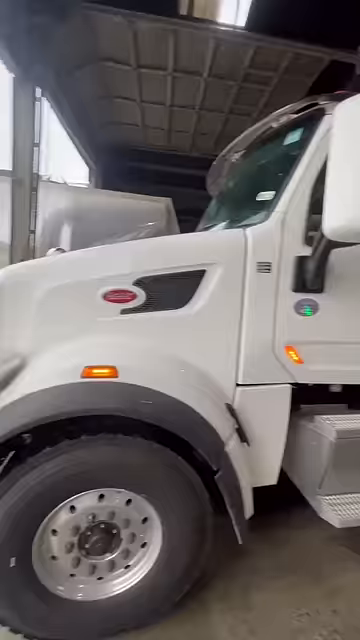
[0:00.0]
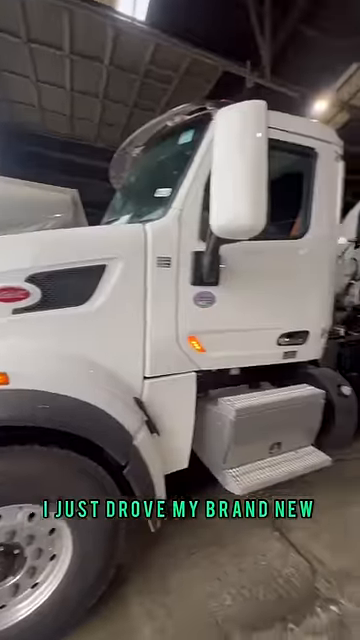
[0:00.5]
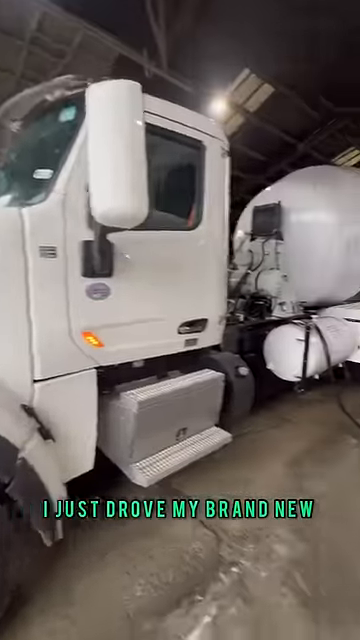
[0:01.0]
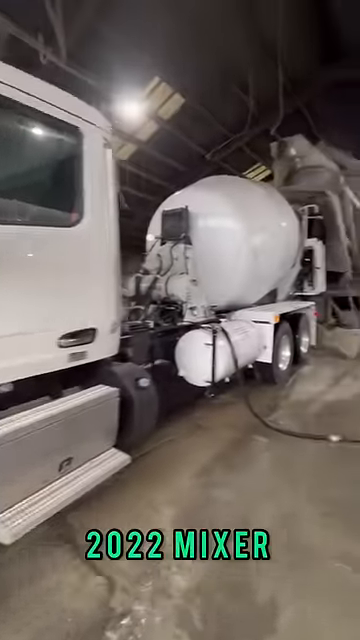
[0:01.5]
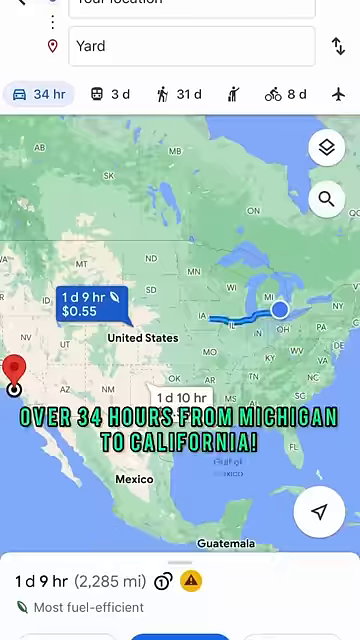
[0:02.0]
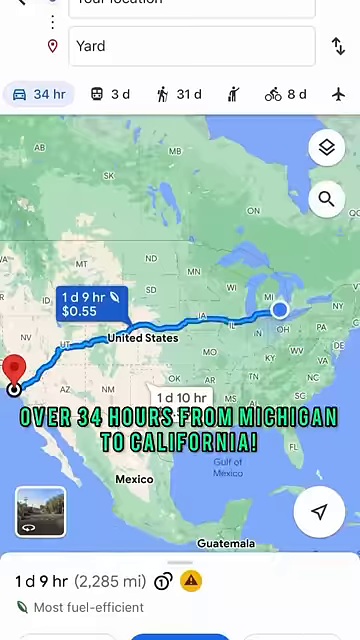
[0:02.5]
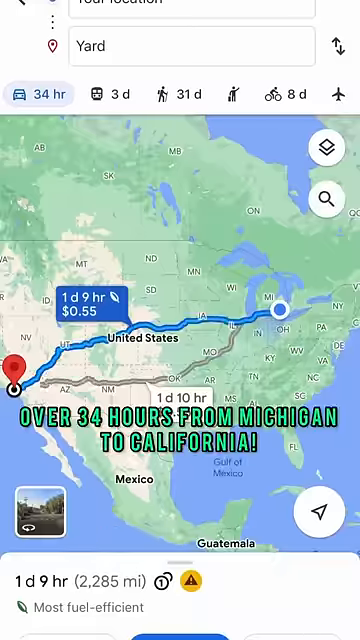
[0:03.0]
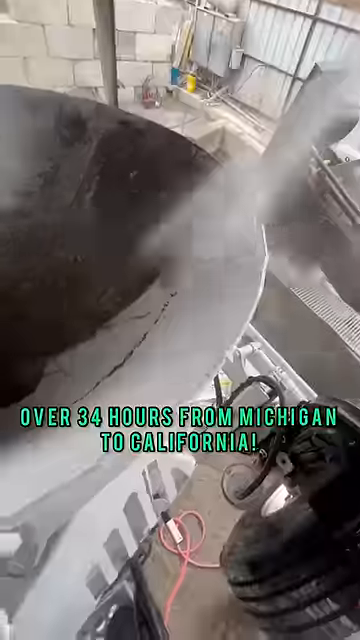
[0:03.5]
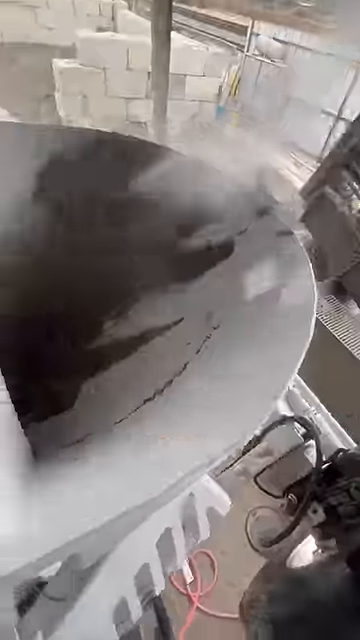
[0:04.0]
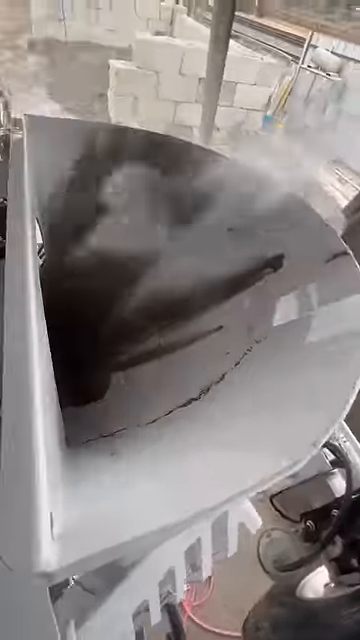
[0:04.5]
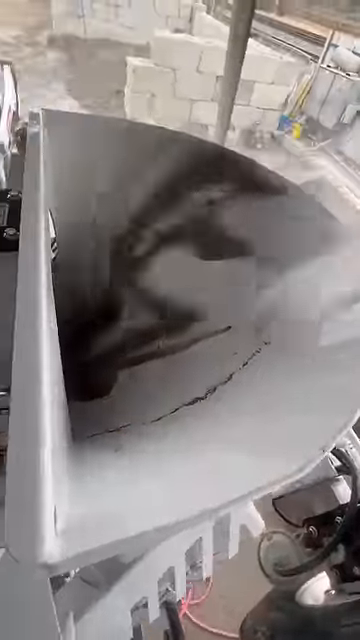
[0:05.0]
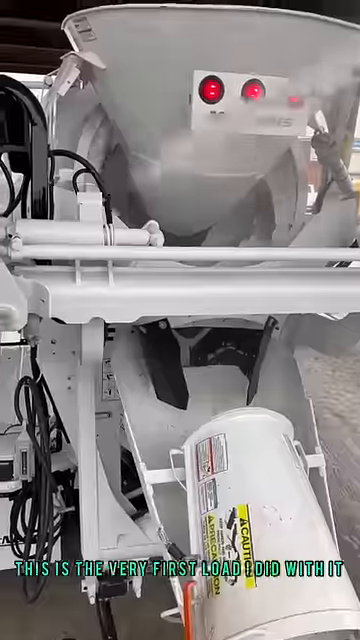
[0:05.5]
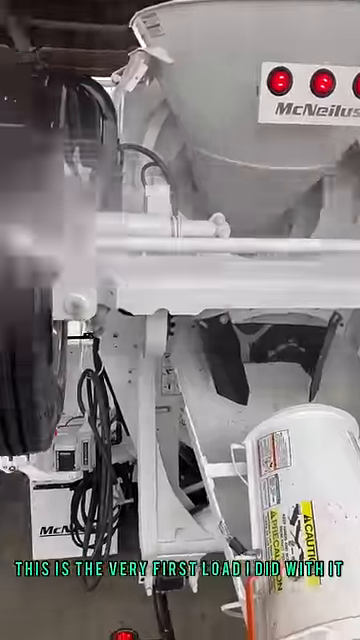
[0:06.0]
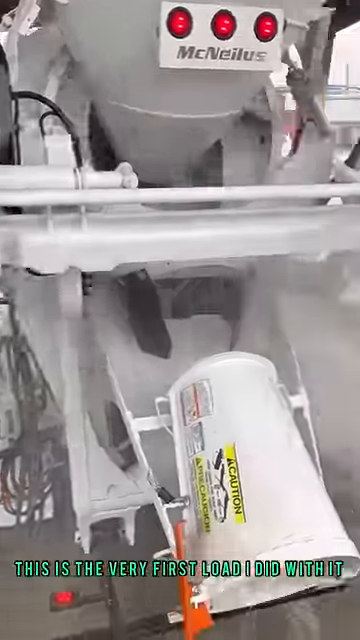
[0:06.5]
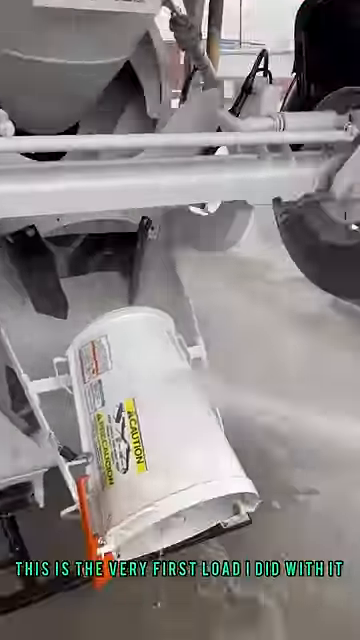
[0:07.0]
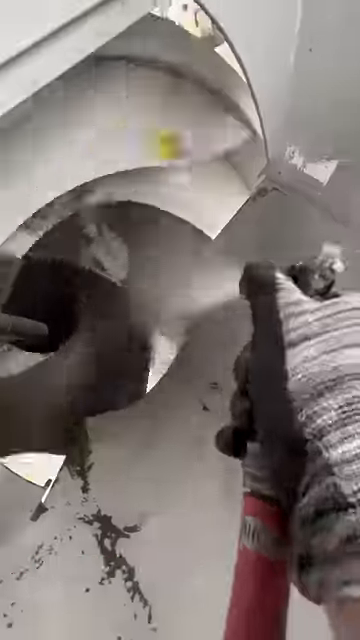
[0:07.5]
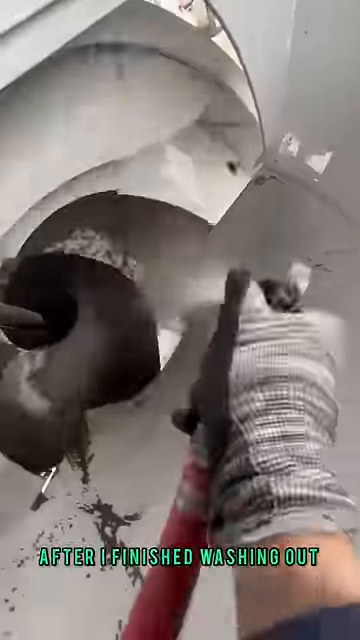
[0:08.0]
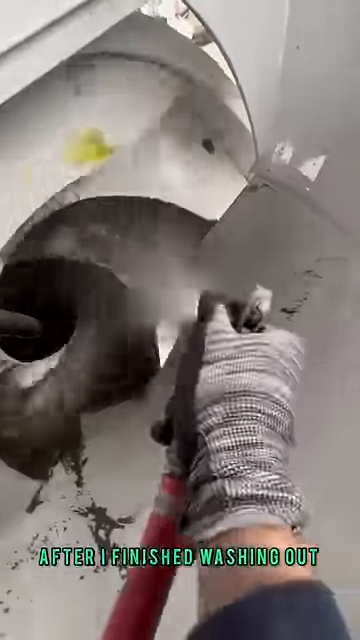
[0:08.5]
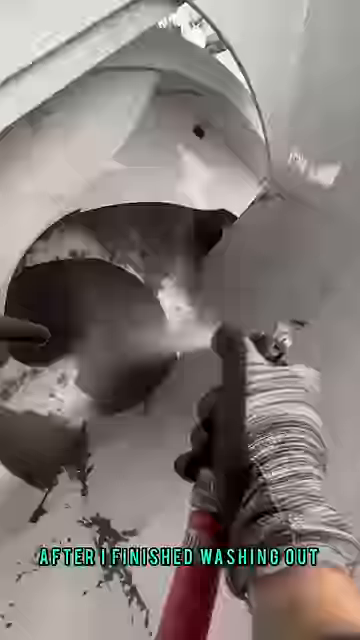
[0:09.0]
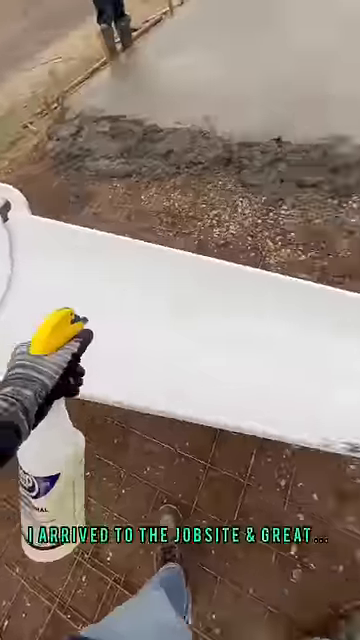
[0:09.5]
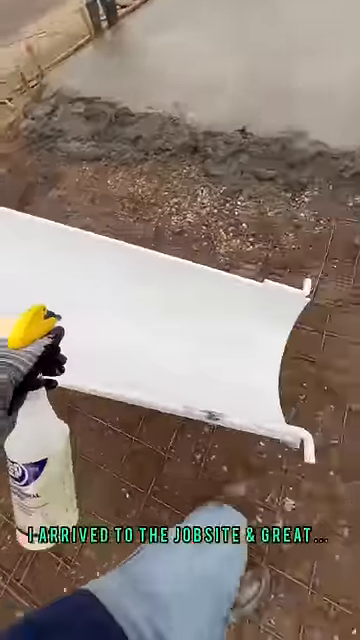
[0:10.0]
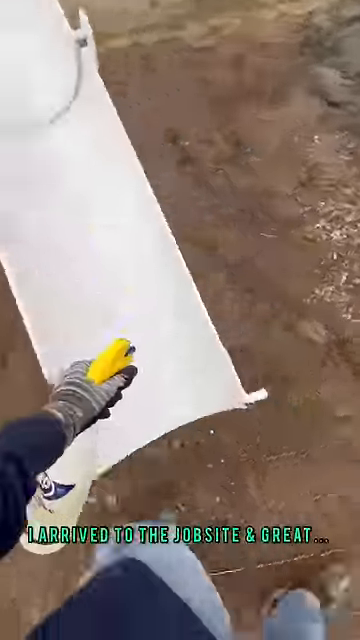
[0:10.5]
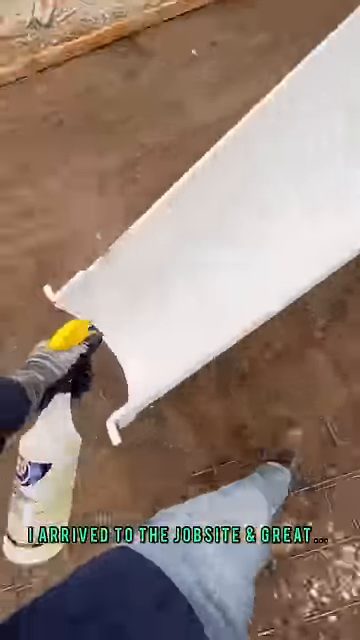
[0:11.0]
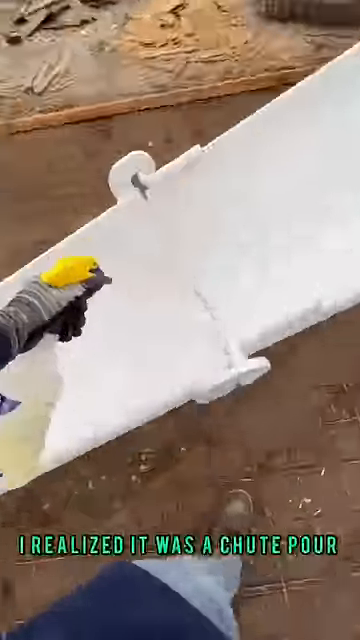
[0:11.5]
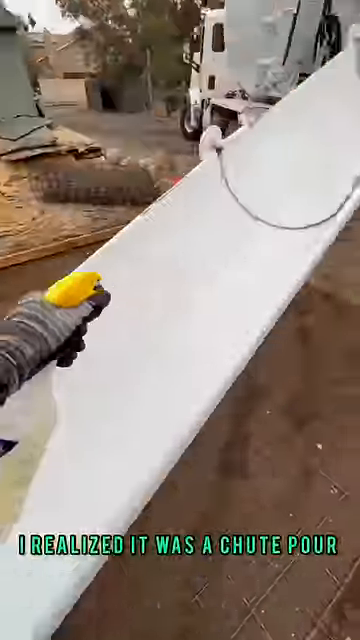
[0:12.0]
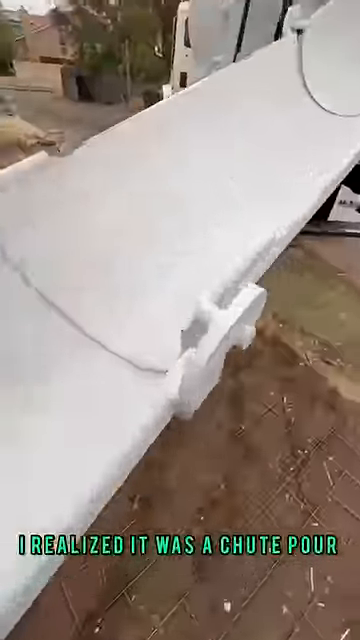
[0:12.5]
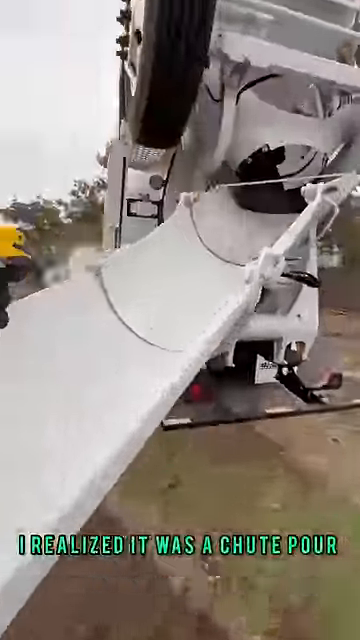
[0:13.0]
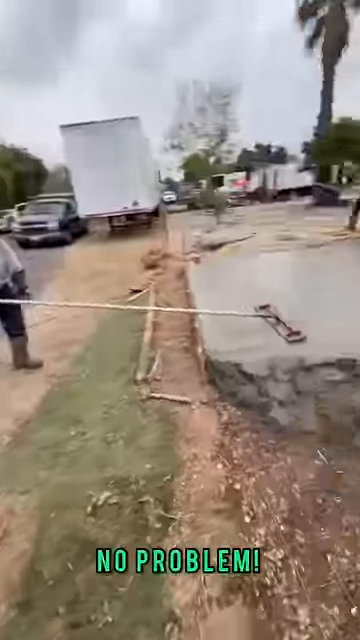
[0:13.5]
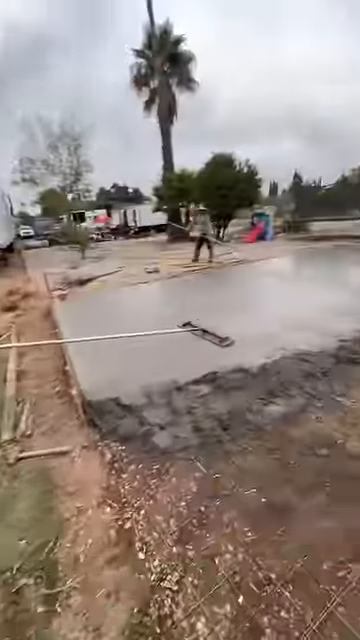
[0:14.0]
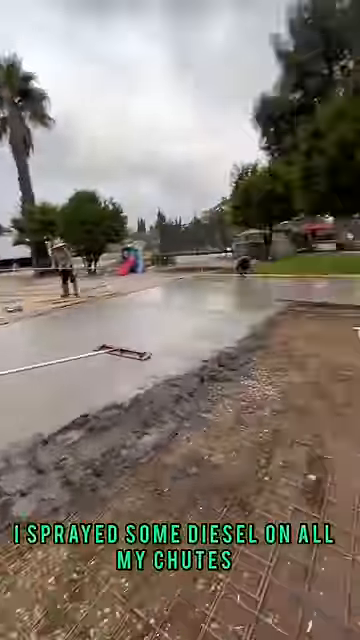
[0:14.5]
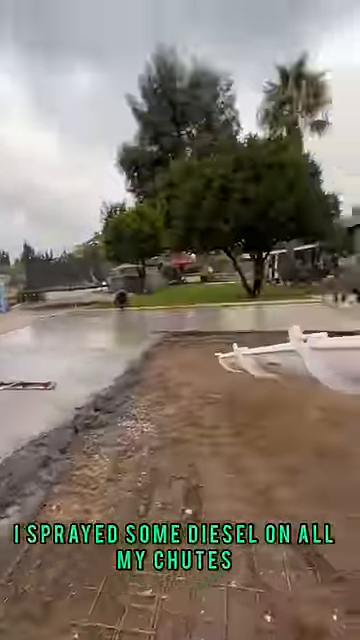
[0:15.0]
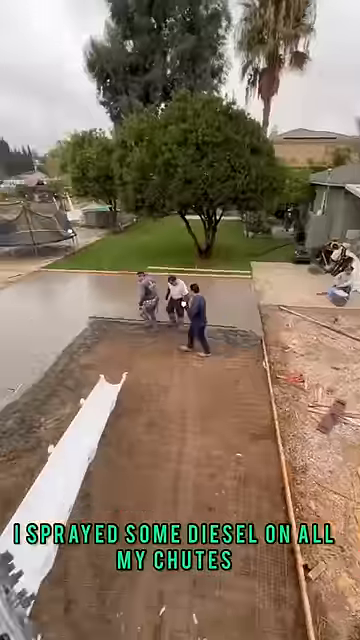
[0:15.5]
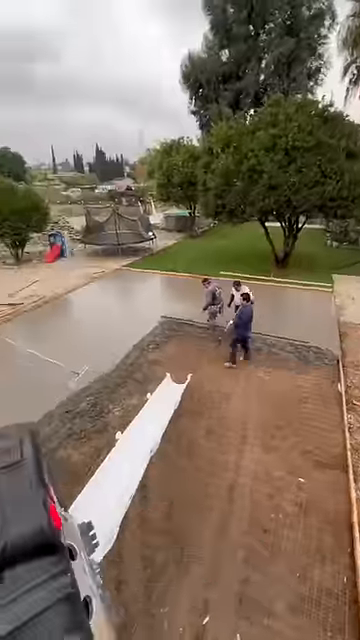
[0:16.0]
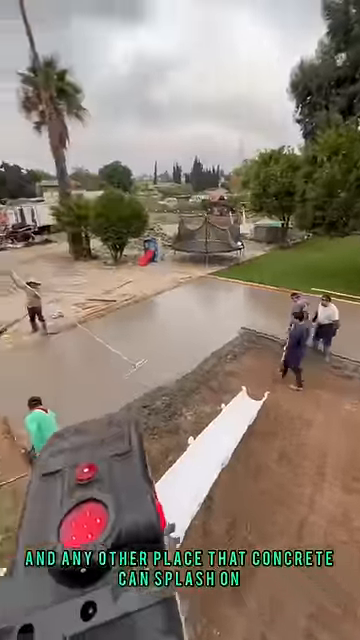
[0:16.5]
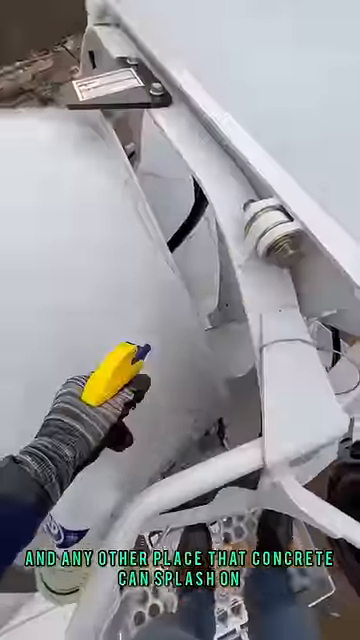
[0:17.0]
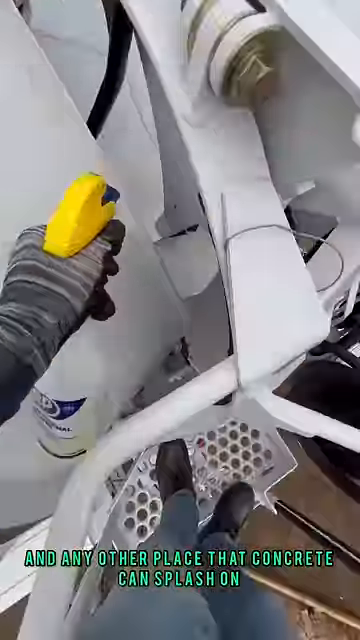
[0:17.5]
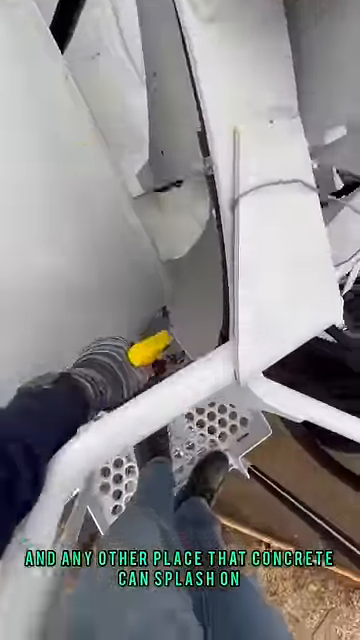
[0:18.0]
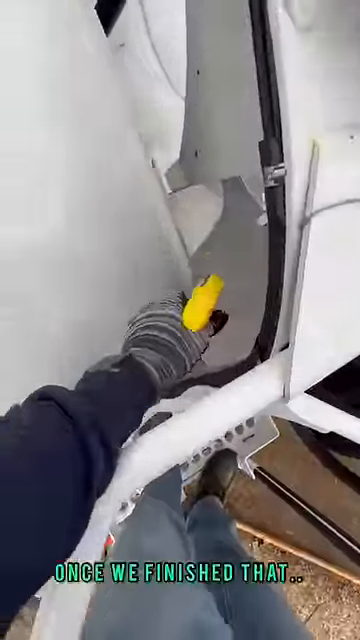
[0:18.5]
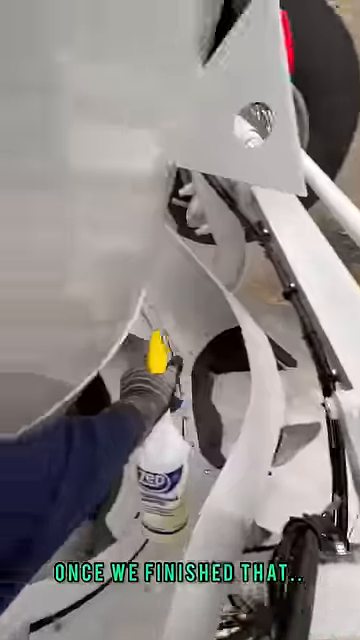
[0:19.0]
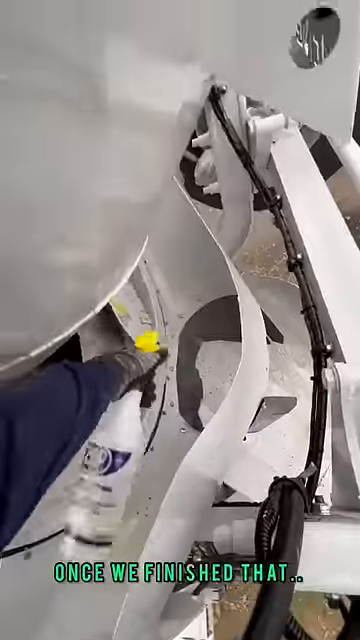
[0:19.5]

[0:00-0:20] The first scene is inside some kind of factory, showing a 2022 mixer: a cement mixer with a white outer shell, inside a factory or an industrial building. A map of the United States then appears with a route from Michigan all the way to California, and text over the map reads "over 34 hours from Michigan to California." A little of Mexico and Guatemala is also visible. A bubble at the top shows the time length, a day and nine hours, and the cost, 0.55 cents. Another route is highlighted in gray. The scene changes back to the mixer in the factory, this time from an angle that appears to be close to the drum. A steel drum is hosed down with white paint. The outside of the mixer is being sprayed with either paint or water; it is unclear which. The spinning section inside the mixer is also sprayed down. Next, a panel that kind of curves inward is sprayed down with a spray bottle, and text at the bottom reads "I arrived to the job site and great. I realized it was a chute pour." He is cleaning the chute of the mixer with the spray bottle. The text changes to "I sprayed some diesel on all my chutes." The scene changes to concrete laid out on the ground being flattened by something like a mop, followed by more scenes of cleaning the chute, with text at the bottom describing what is happening.